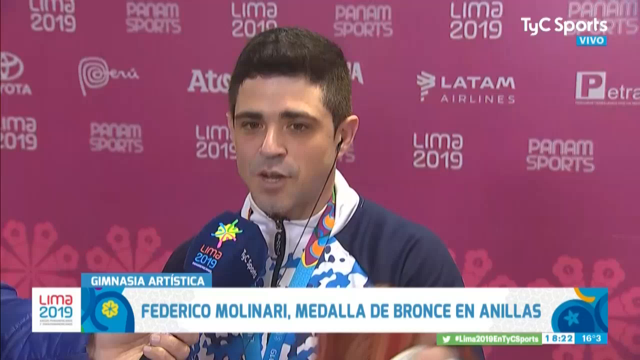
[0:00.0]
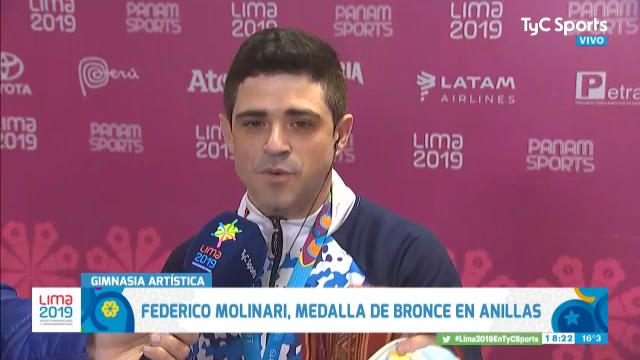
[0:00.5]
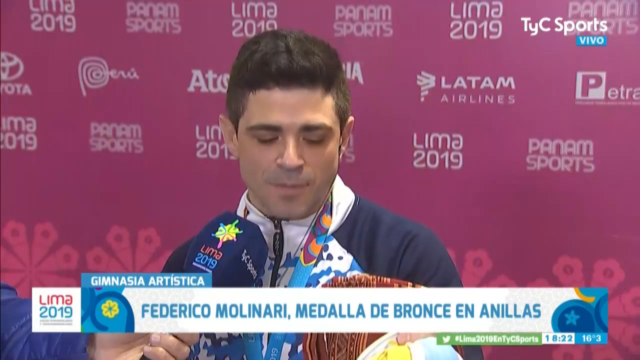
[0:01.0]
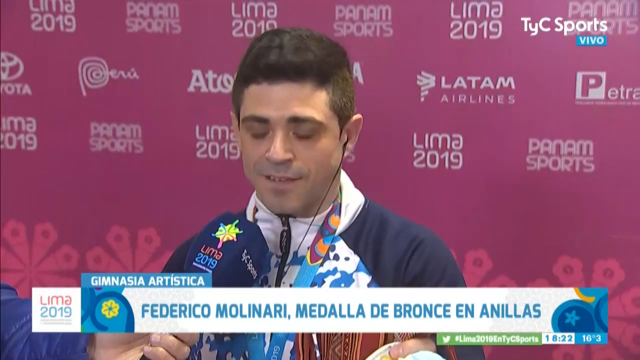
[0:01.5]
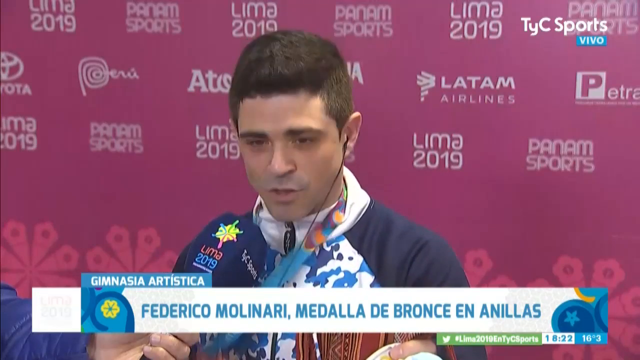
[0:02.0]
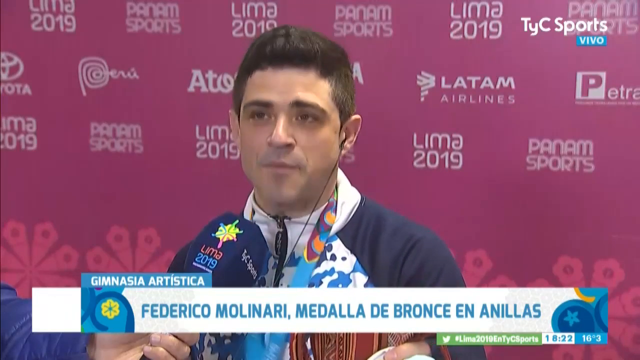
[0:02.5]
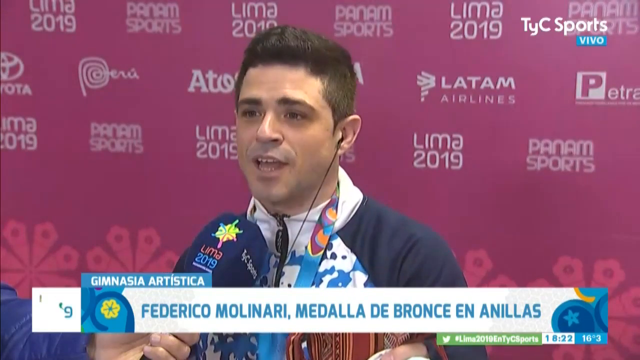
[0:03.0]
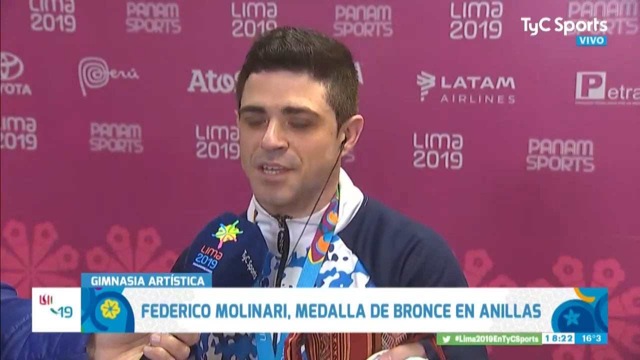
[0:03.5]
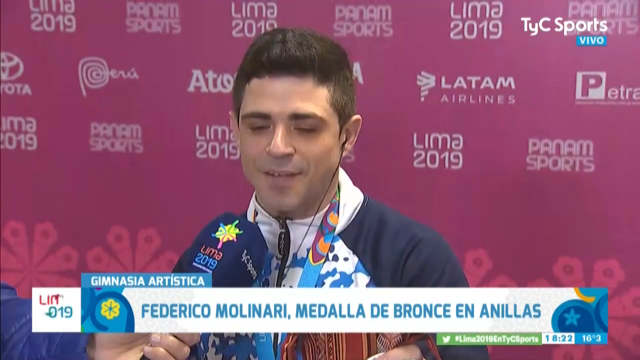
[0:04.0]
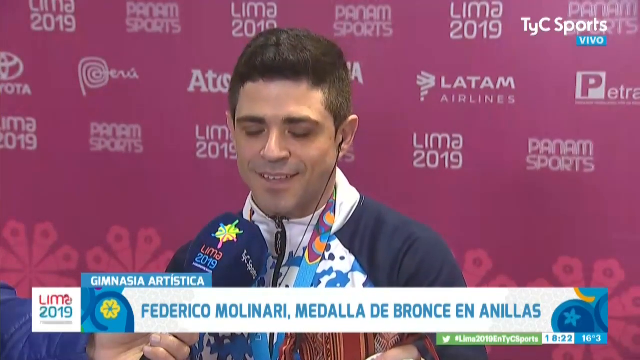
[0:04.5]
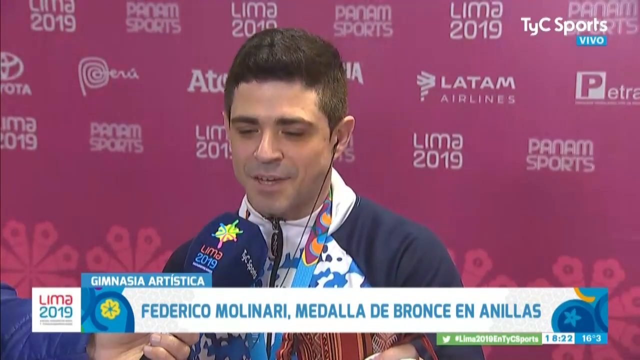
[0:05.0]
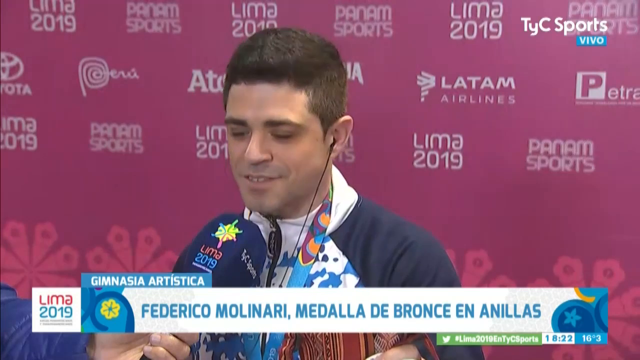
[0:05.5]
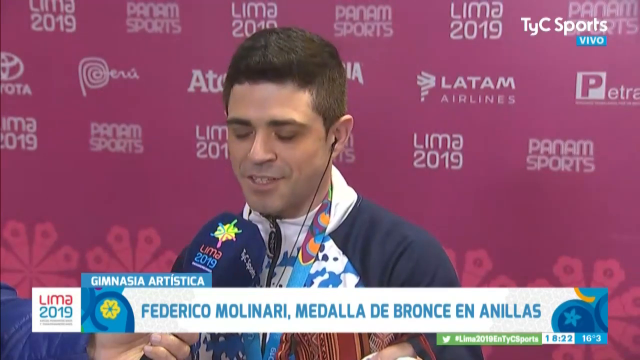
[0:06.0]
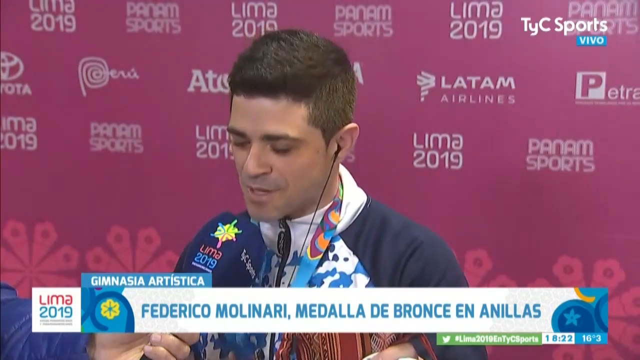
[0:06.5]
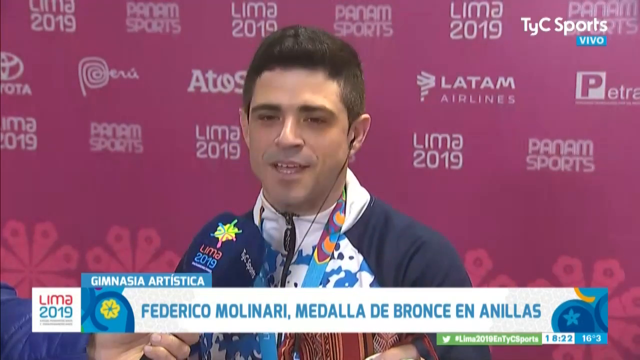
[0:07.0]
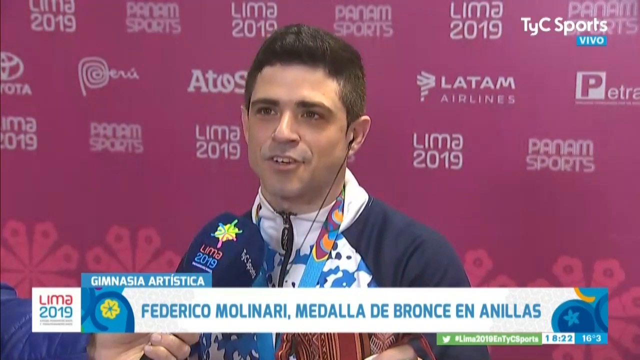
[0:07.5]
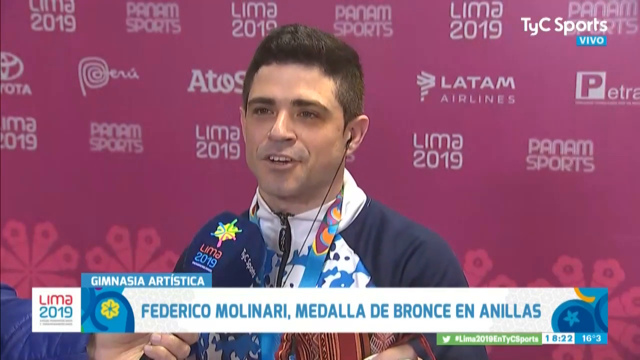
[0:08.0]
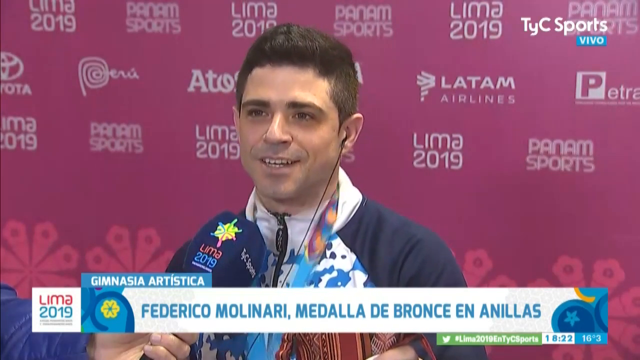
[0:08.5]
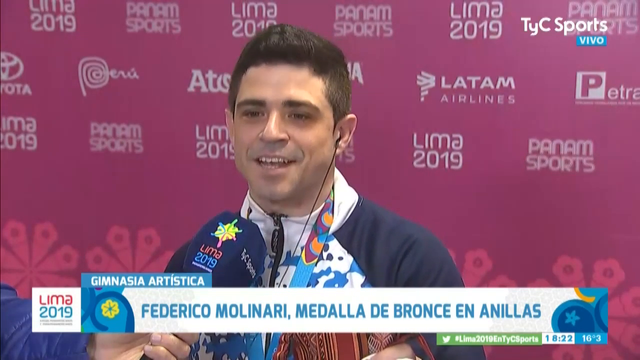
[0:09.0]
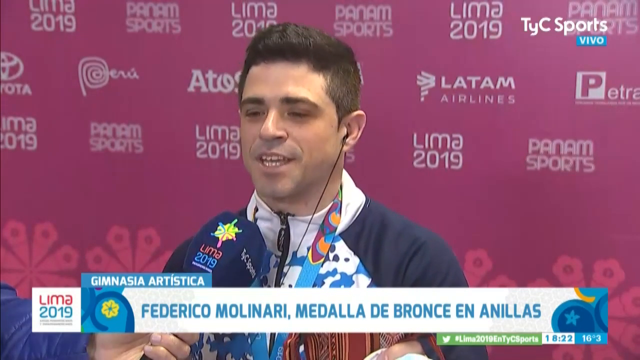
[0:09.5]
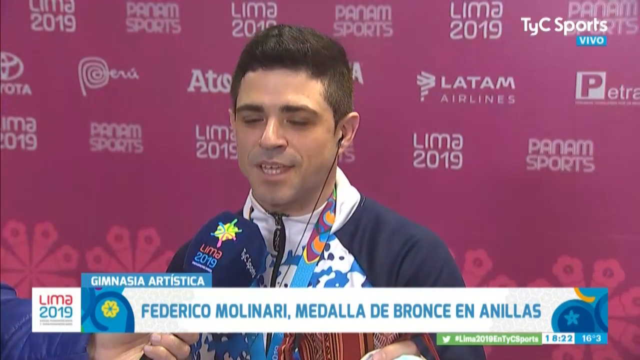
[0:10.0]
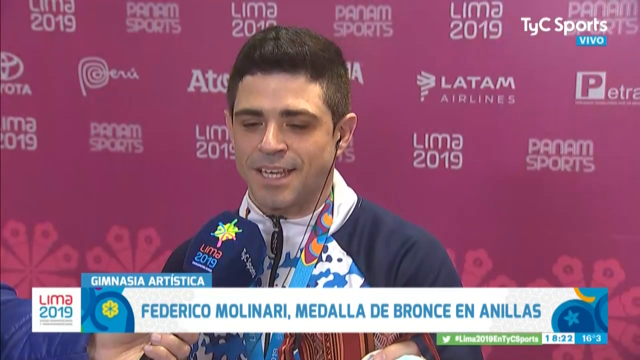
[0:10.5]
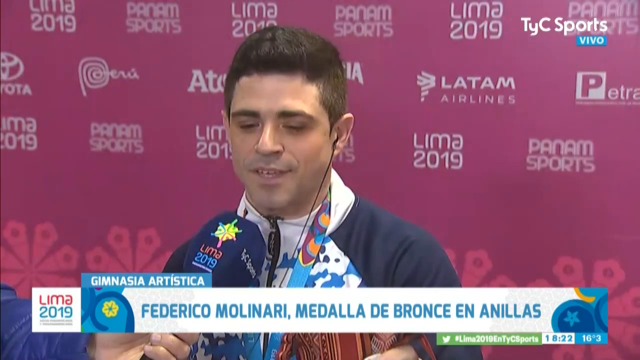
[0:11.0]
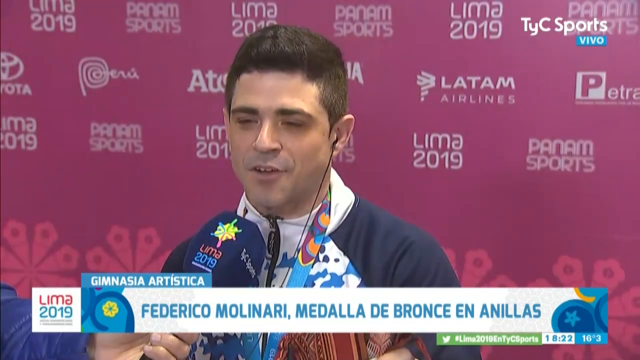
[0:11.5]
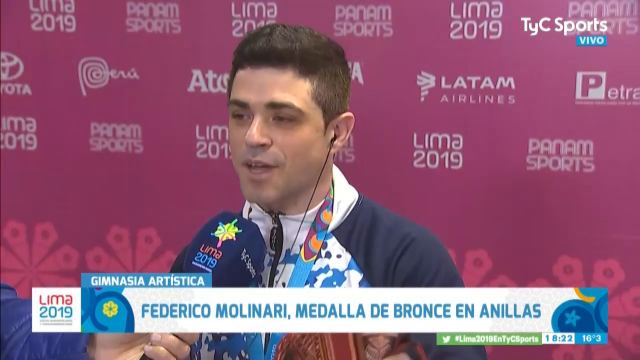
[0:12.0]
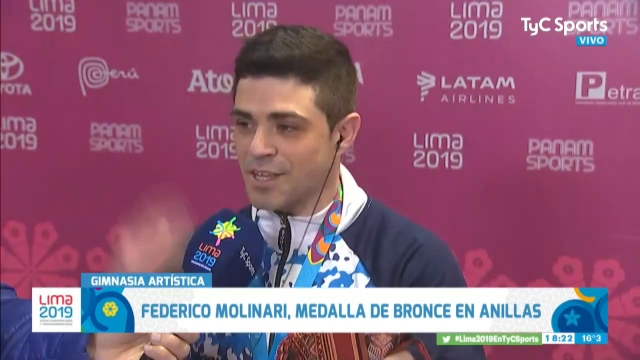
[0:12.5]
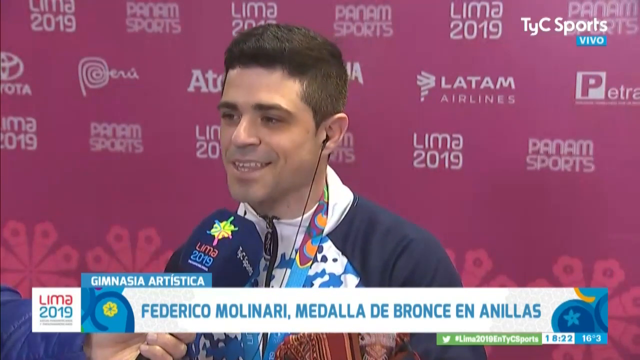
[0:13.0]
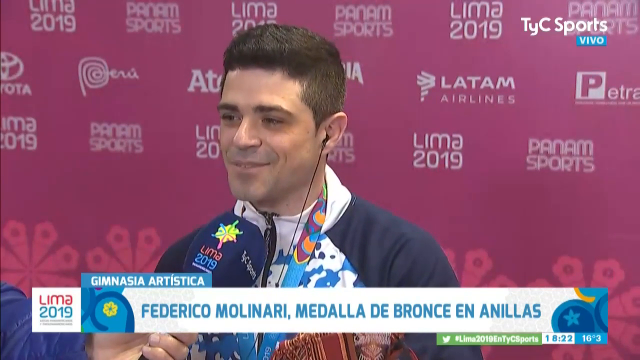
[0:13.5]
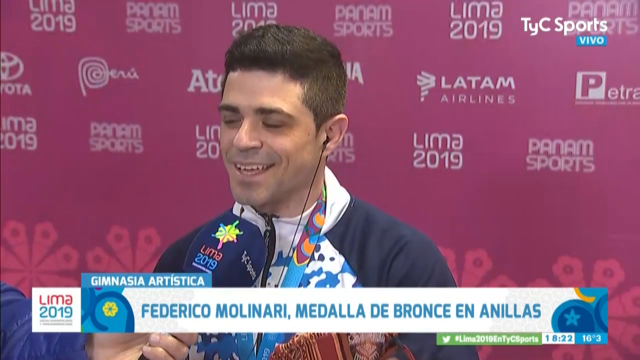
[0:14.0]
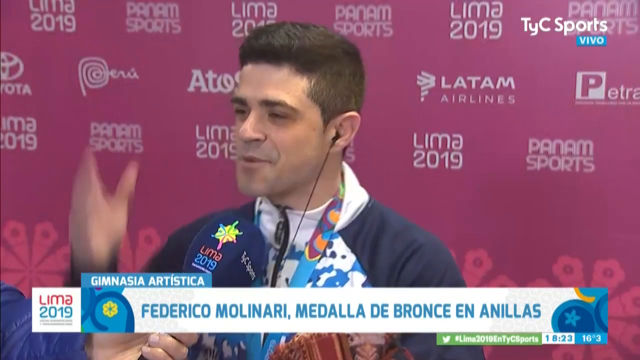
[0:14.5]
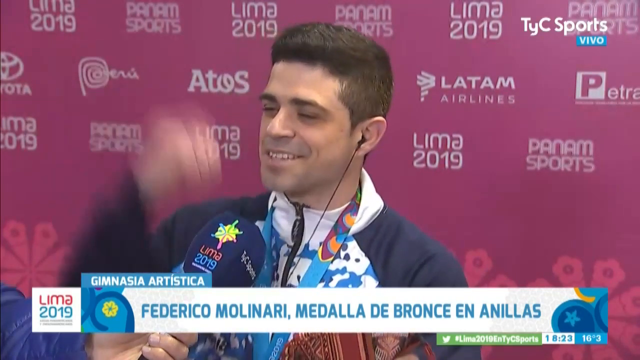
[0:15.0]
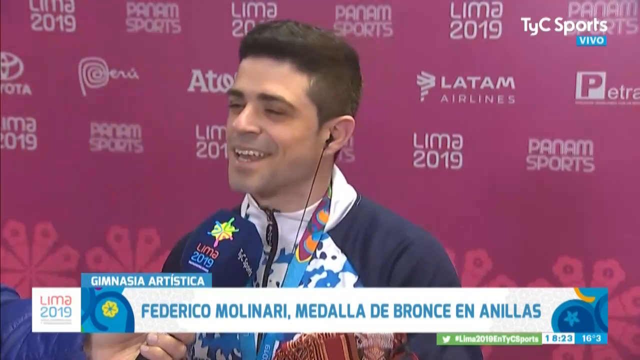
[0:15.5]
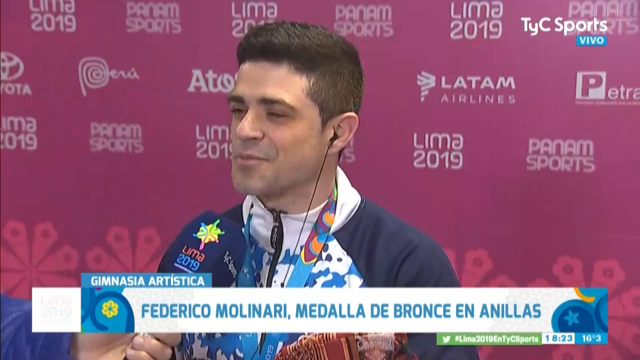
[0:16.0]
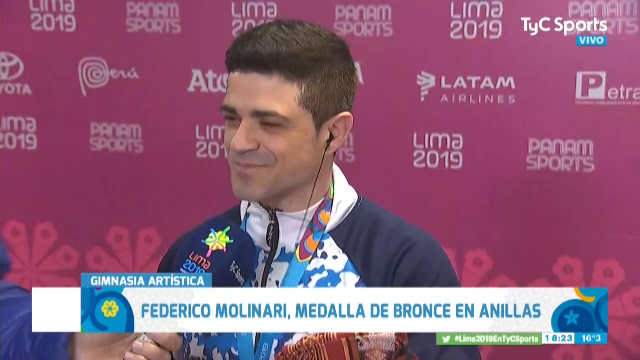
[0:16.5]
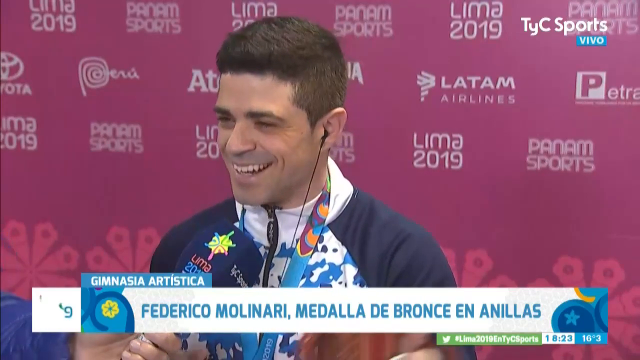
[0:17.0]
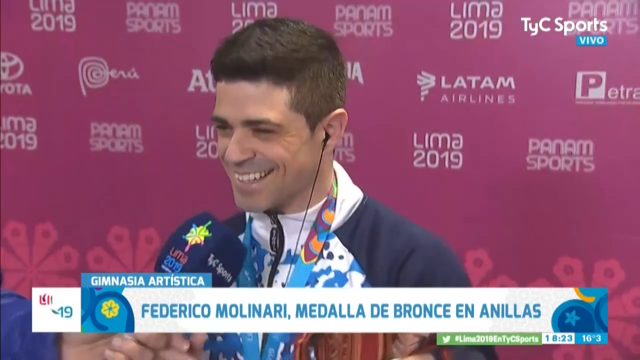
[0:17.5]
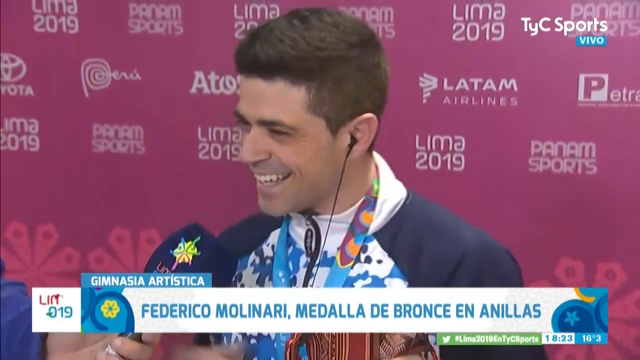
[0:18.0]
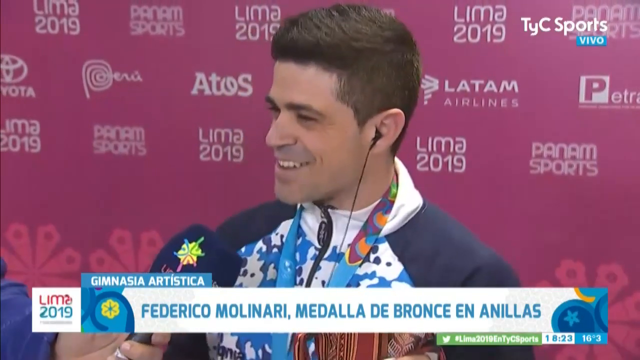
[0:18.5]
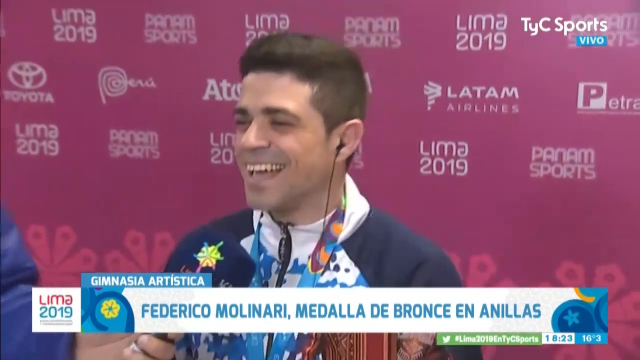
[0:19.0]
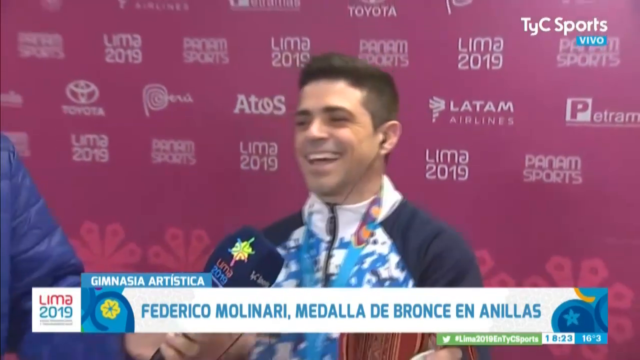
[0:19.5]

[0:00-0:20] A man is on screen in an interview. Much of the text is in a foreign language, but the poster board behind him says "Lima 2019." Sponsors on the board include LATAM Airlines and Pan Am Sports, along with others that are hard to see. A microphone is in front of him, and he has an earphone in one ear. The person holding the microphone in front of him is standing off to the side. The man smiles as he talks, using his hands animatedly: he lifts his hands up, looks at the crowd out in front of him, and points. He laughs very hard as he speaks to the crowd and, probably, the person holding the microphone who is interviewing him. He is holding something in his hand that appears to be some type of trophy, as if he may have just won, and he has a medal around his neck. The "Lima 2019" board probably indicates some type of sporting event.